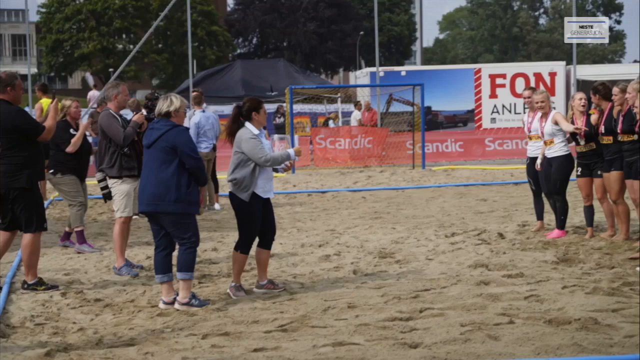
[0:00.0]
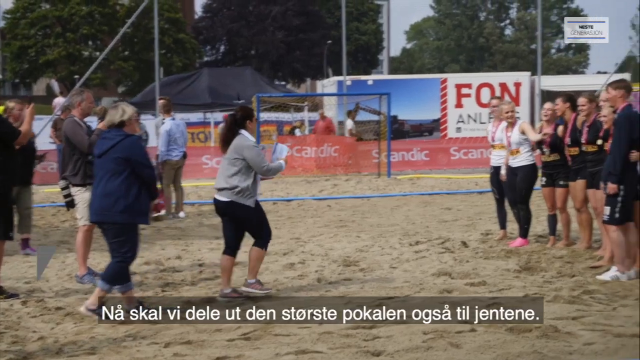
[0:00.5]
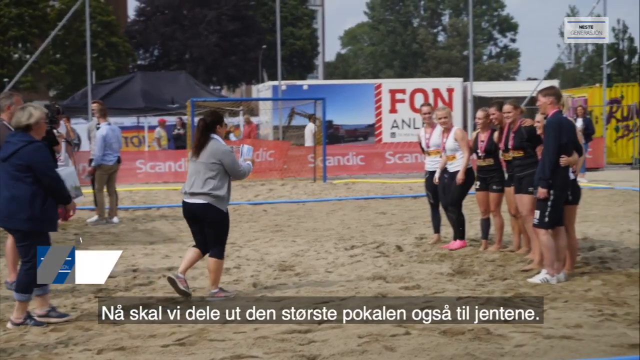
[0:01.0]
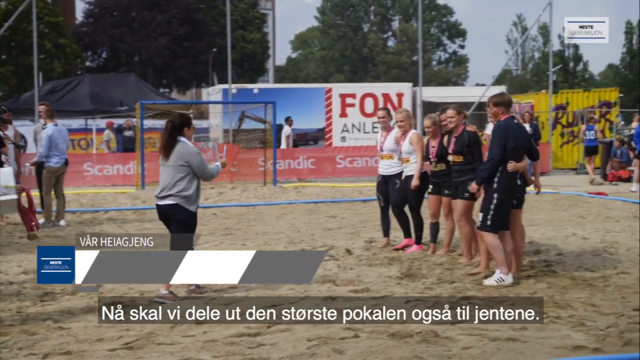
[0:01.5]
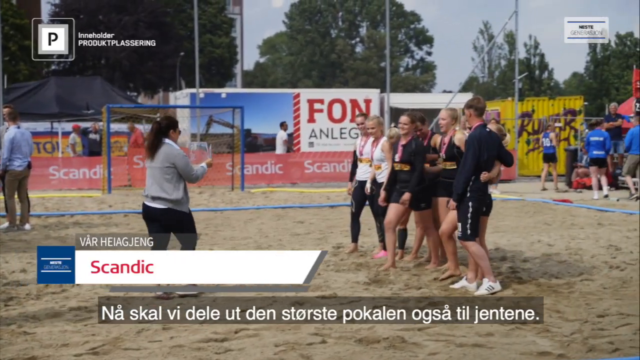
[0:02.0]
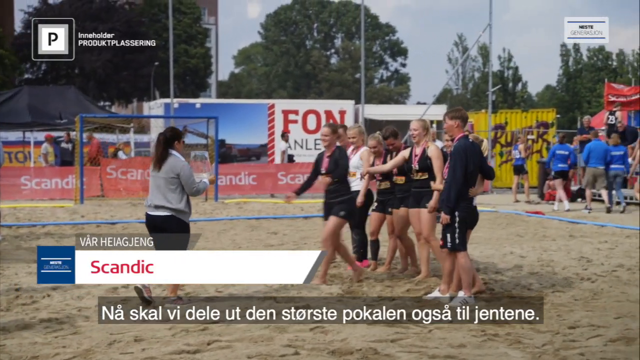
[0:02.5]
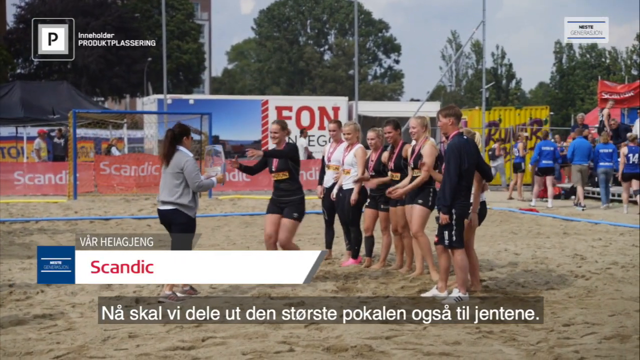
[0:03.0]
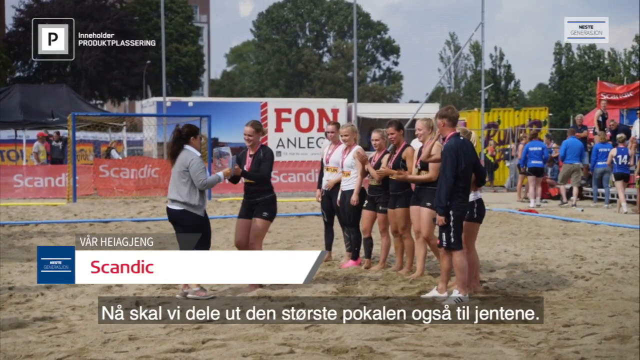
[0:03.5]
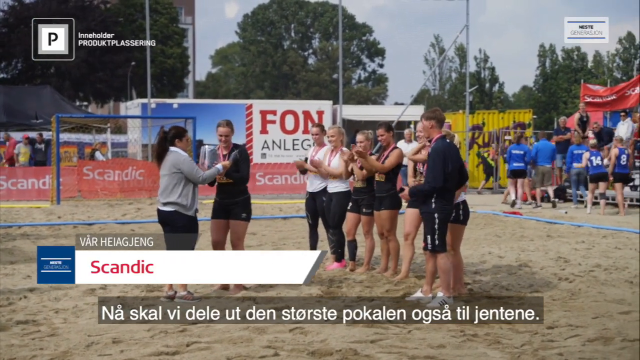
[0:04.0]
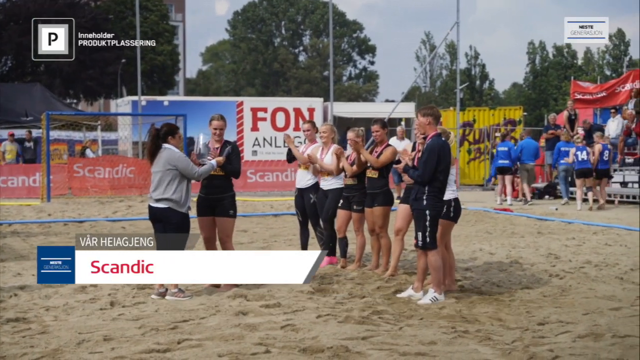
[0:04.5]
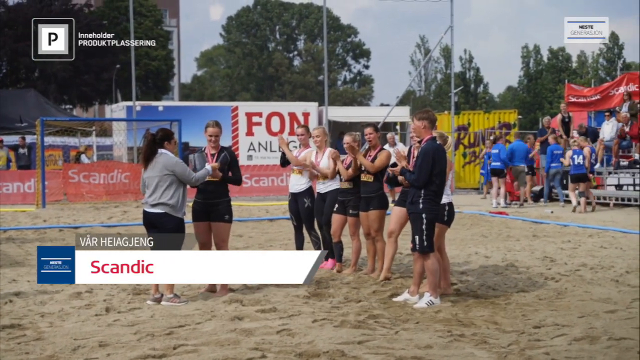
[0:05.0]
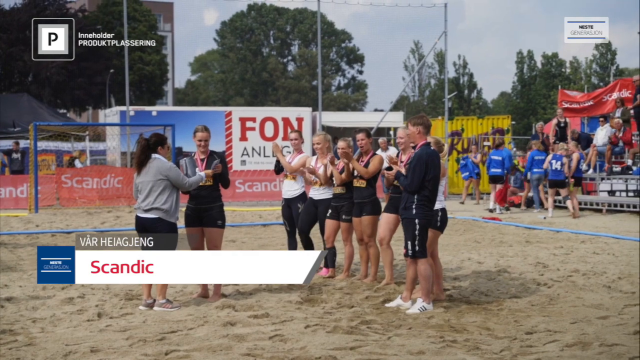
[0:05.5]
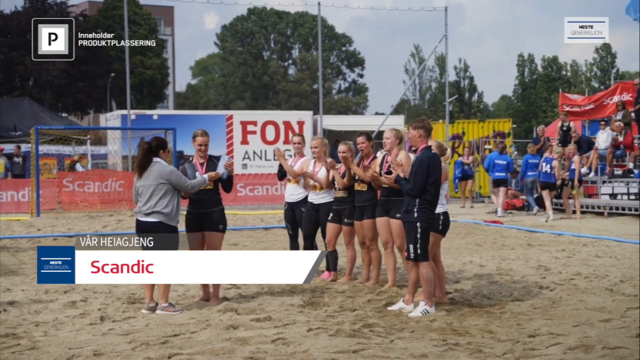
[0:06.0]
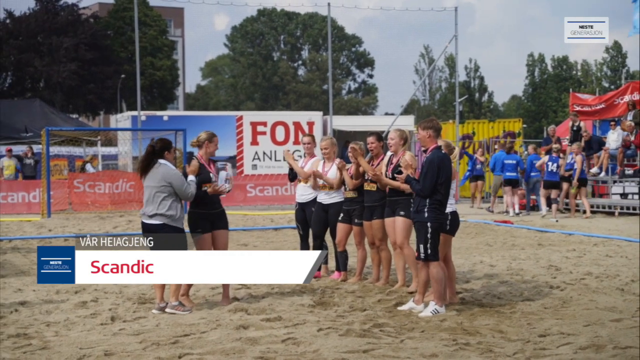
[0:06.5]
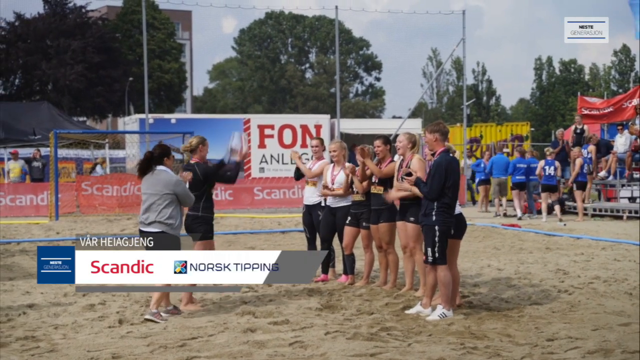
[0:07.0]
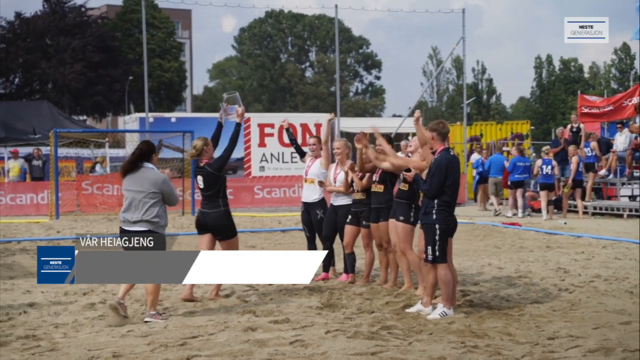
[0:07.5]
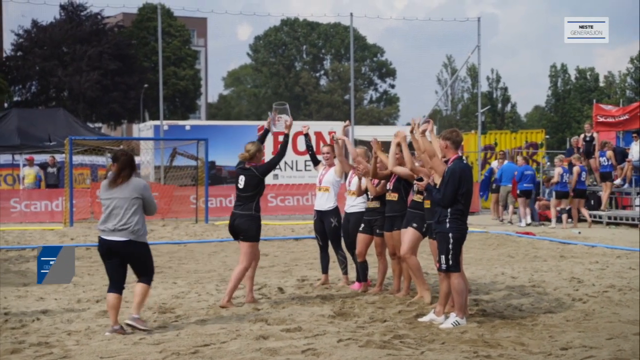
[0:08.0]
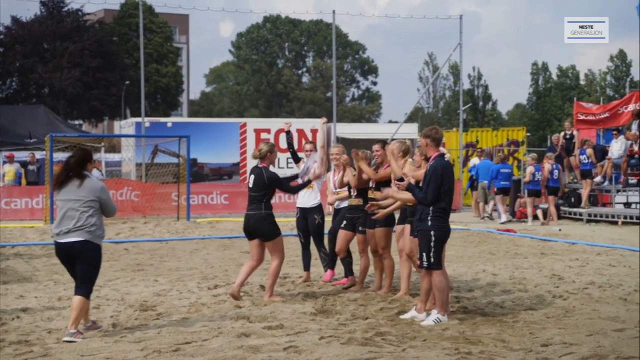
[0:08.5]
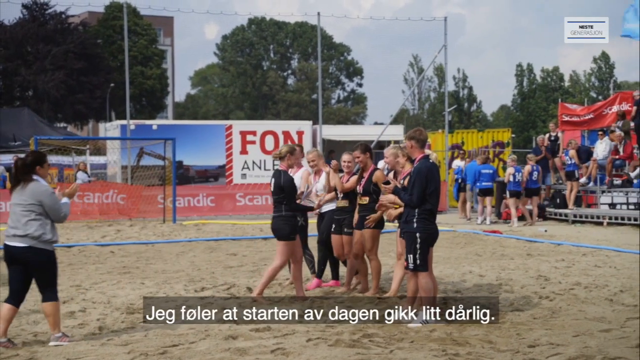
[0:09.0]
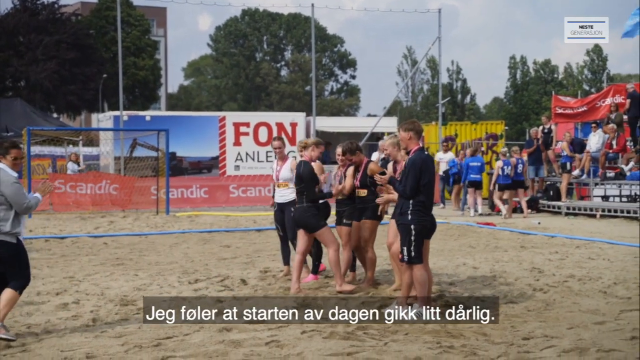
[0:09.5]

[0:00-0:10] Girls and what appears to be one guy are on a sandy playing area. They appear to be receiving some kind of trophy or plaque, apparently for winning or placing in a competition. They are dressed in black, and some of the women wear white tops. The sport is unclear, but they have received what appears to be a clear glass plaque of some sort at the end of the competition. Blue nets are in the background, and blue markers in the sand mark out a playing field. A border carries text that seems to read Scandic.